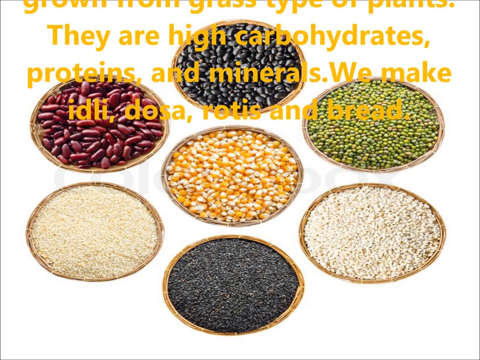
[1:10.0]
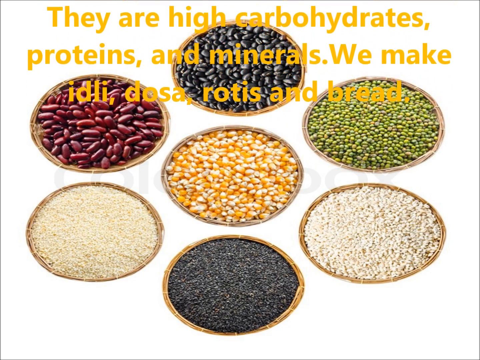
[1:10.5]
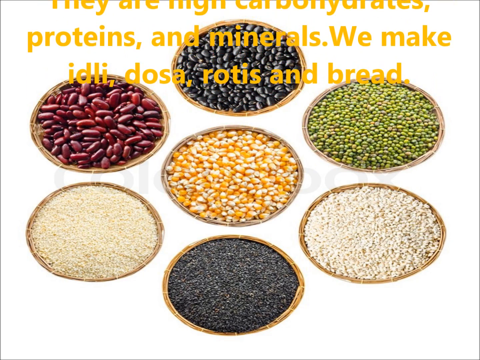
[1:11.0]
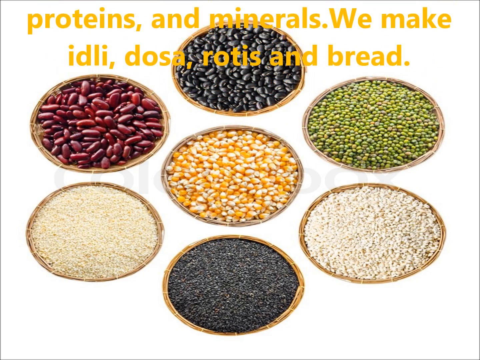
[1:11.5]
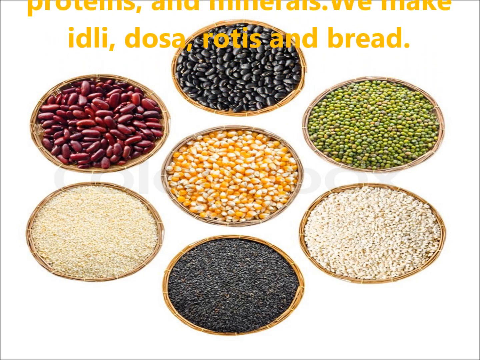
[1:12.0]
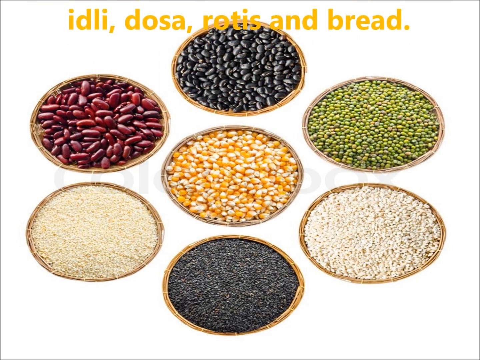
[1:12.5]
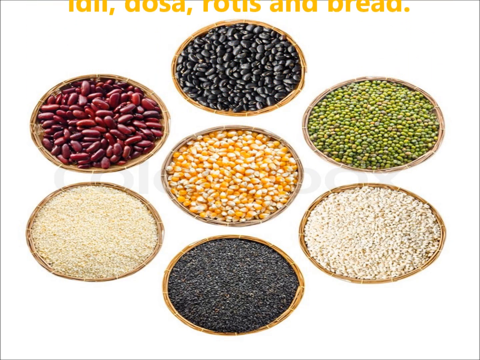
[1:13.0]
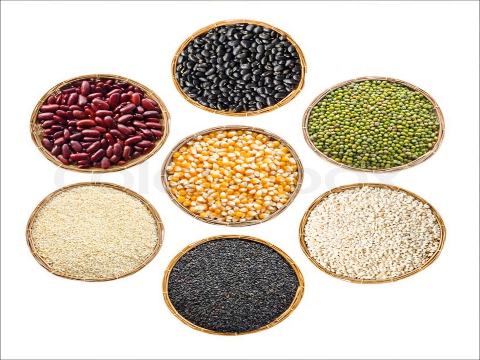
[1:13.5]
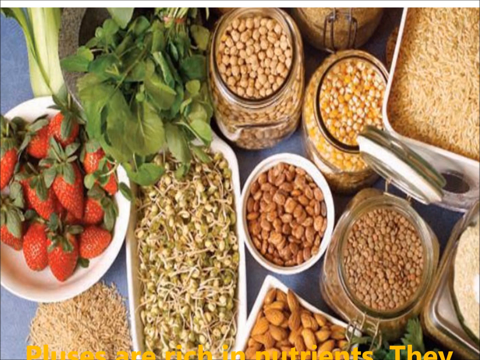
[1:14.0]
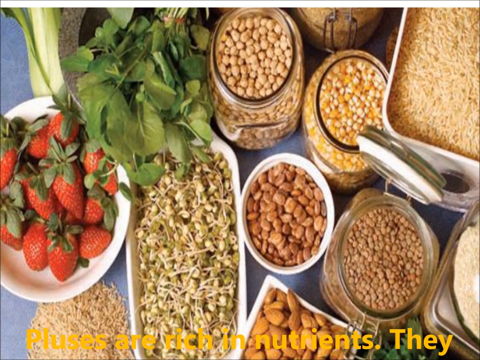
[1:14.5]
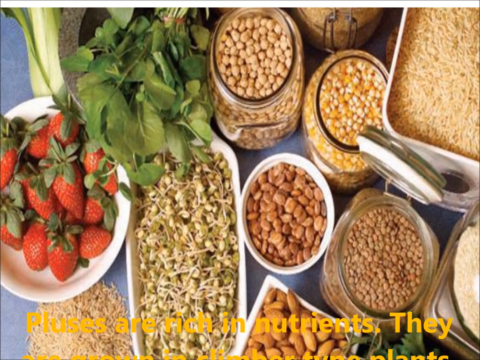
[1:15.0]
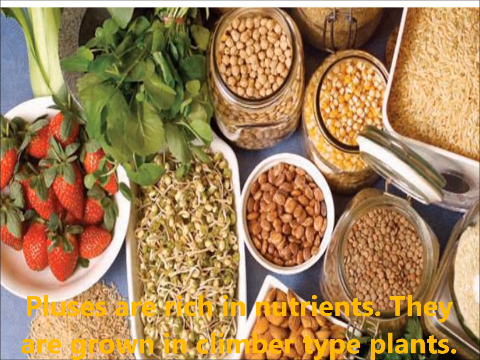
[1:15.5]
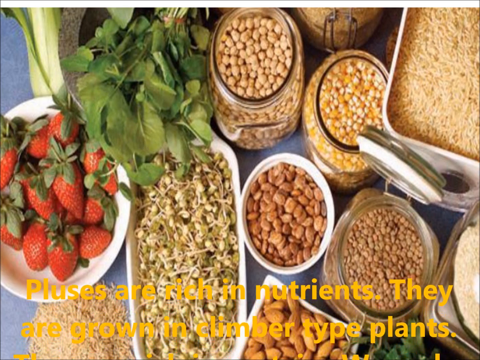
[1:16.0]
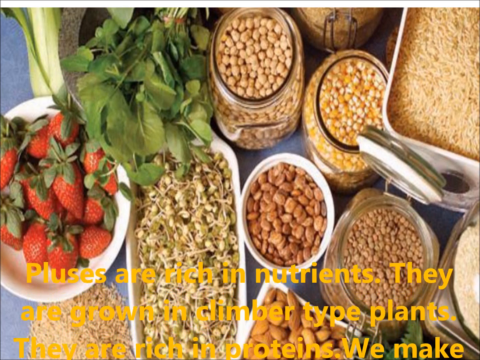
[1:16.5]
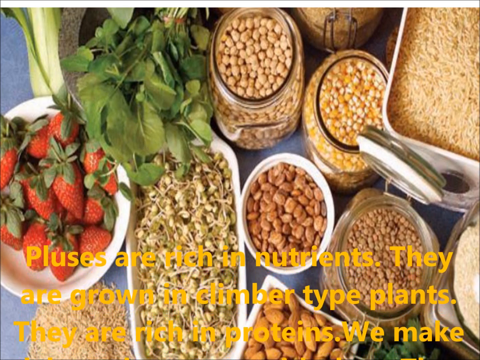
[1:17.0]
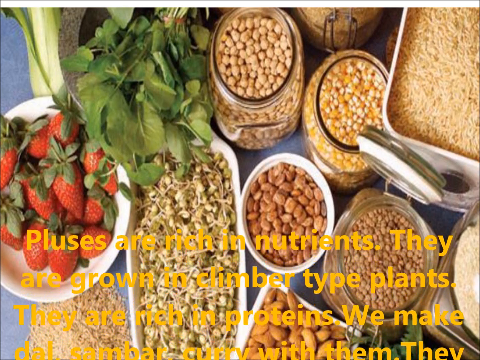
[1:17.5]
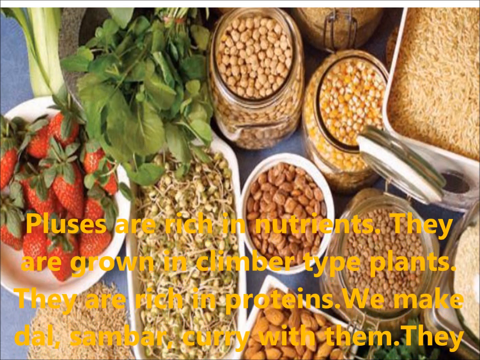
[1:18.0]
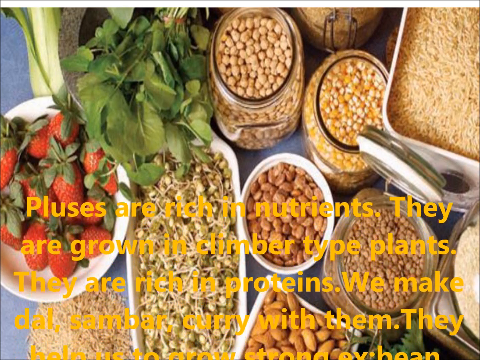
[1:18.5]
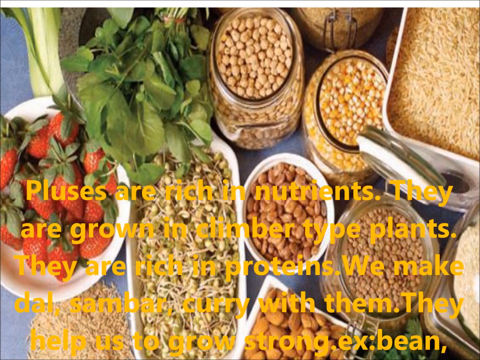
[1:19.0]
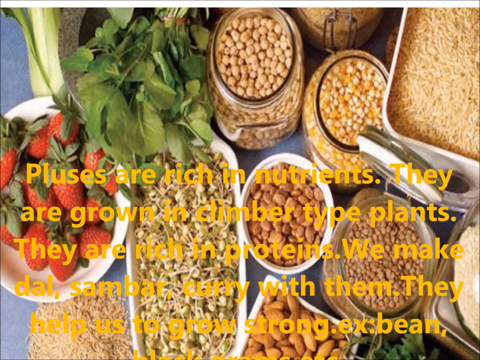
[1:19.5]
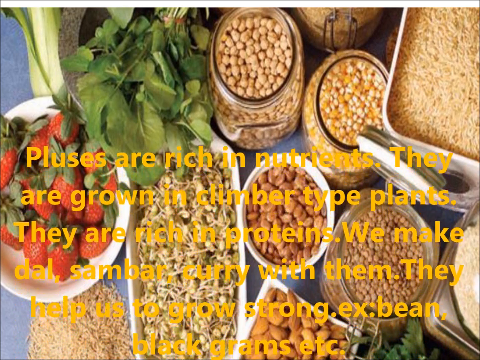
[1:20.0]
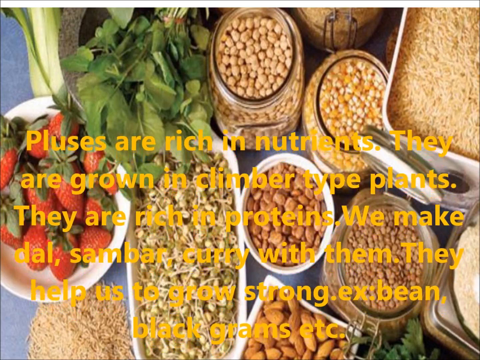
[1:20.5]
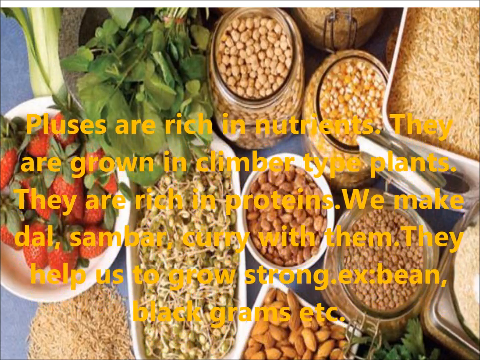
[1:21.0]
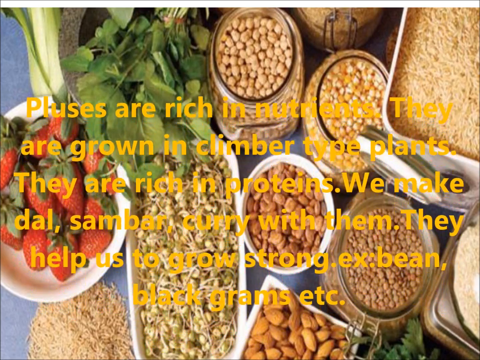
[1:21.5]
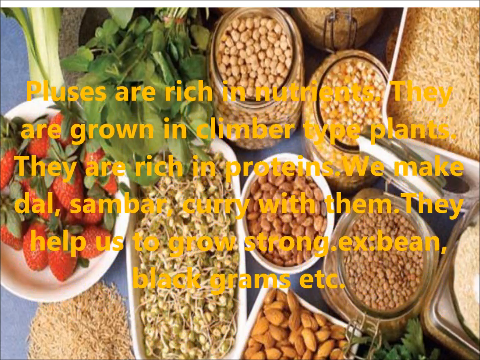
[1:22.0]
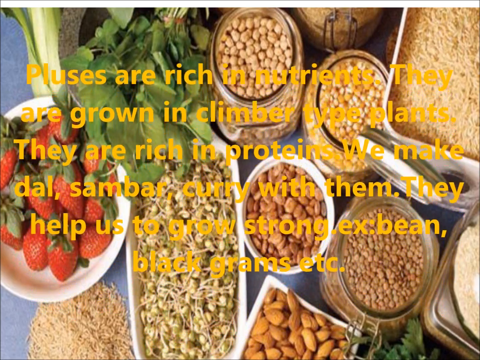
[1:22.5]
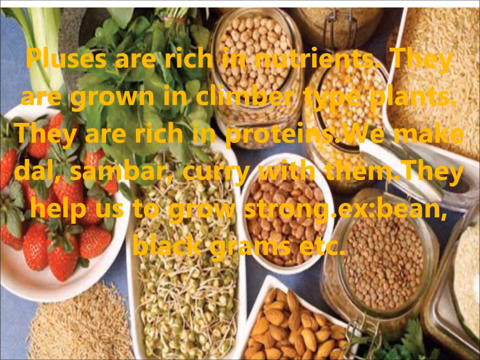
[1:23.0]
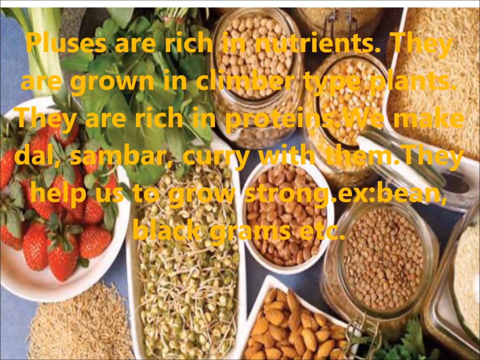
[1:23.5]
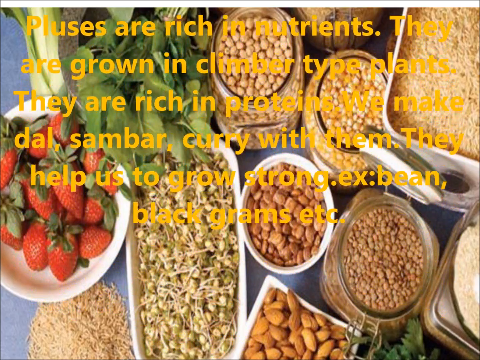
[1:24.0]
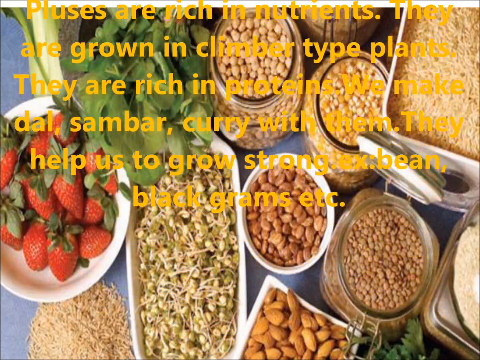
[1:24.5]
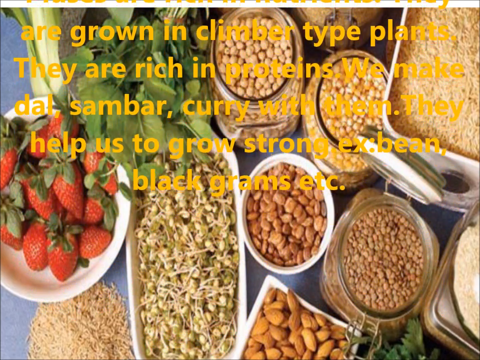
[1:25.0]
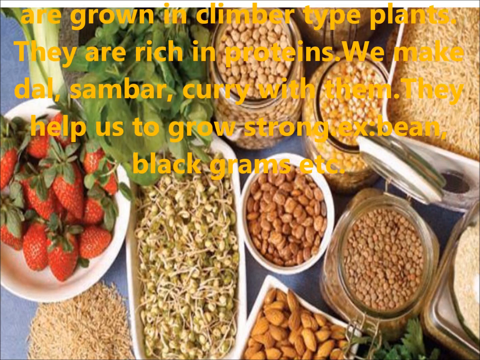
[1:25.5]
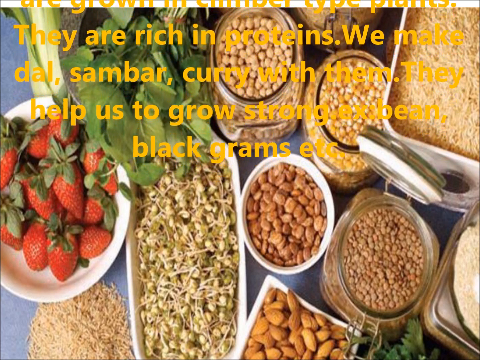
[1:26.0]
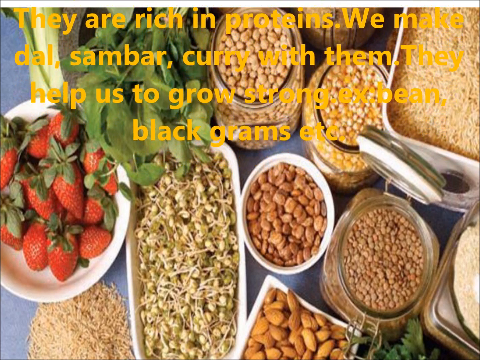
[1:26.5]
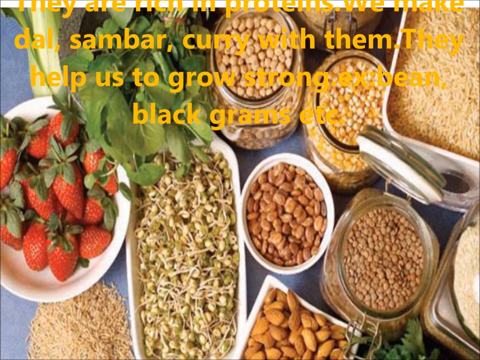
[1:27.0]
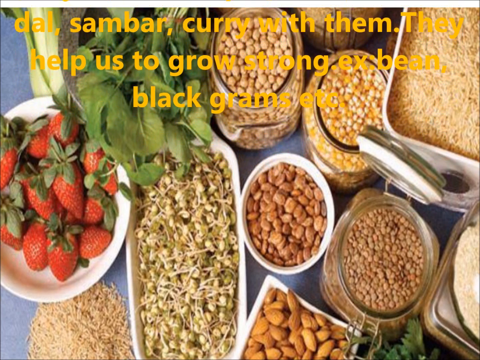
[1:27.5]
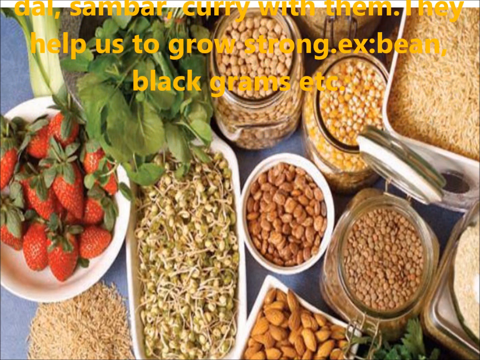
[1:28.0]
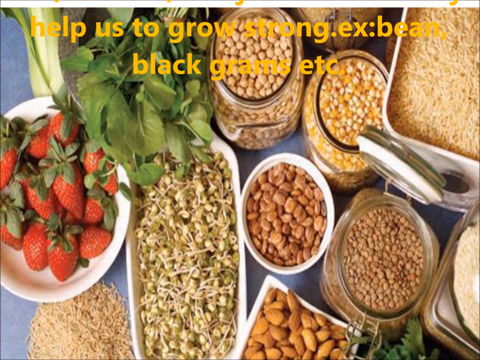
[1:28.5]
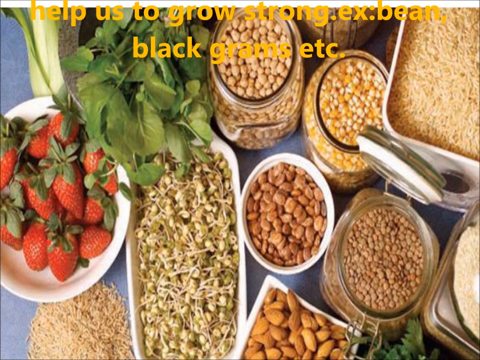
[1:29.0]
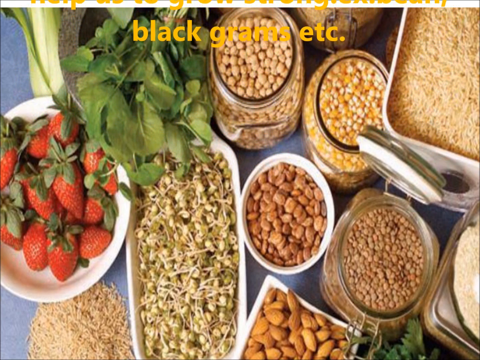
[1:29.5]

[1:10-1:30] The seeds are in the middle, circling around each other. The scene then transitions to another shot showing a bunch of berries, fruits and strawberries together. Text on the screen talks about how plums are rich in nutrients, the type of plants, how they are rich in protein, how they help us grow stronger and bigger, and how they have more grams of protein. The text moves up to the top of the screen, and then the video pauses.